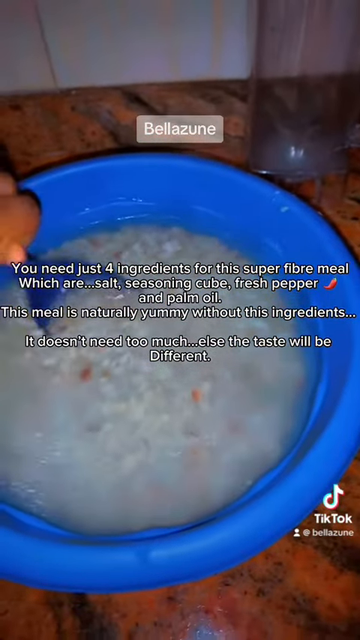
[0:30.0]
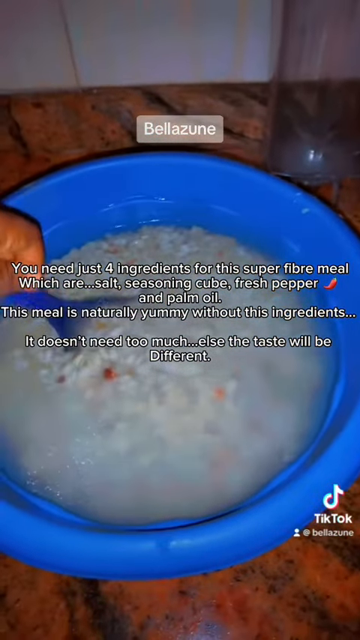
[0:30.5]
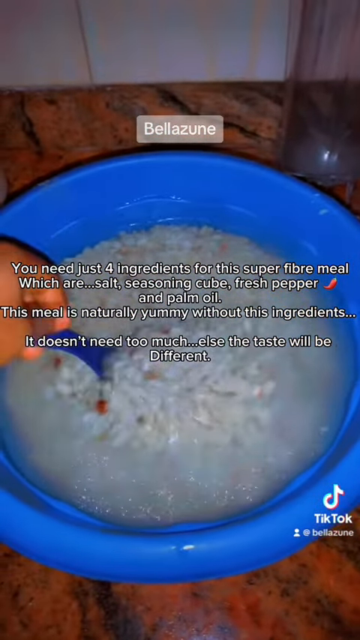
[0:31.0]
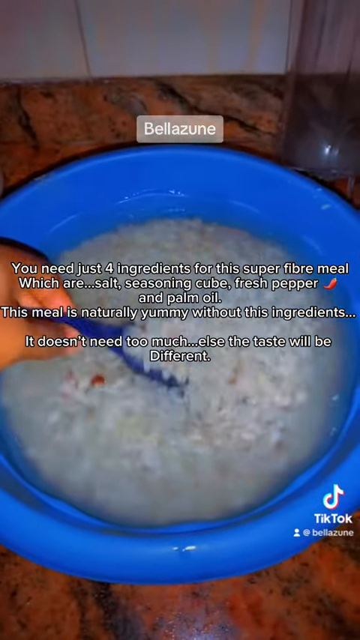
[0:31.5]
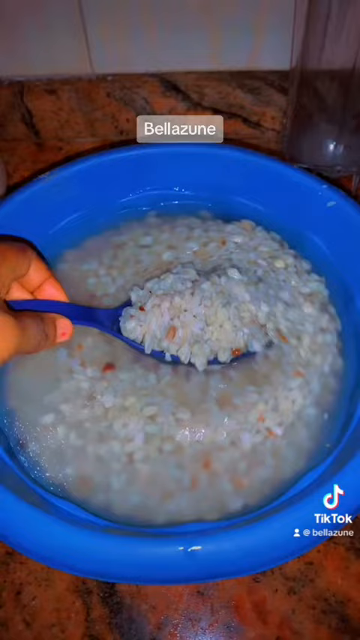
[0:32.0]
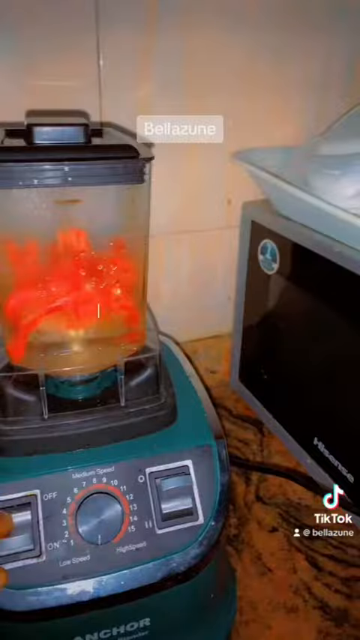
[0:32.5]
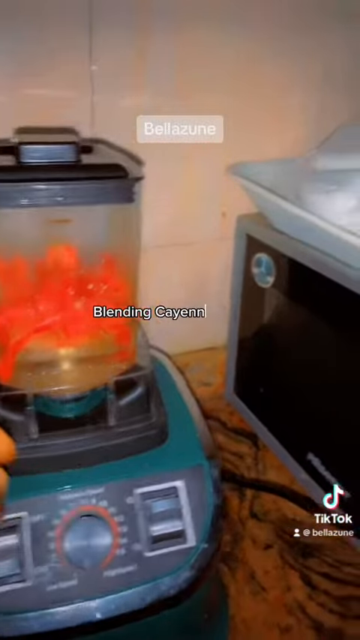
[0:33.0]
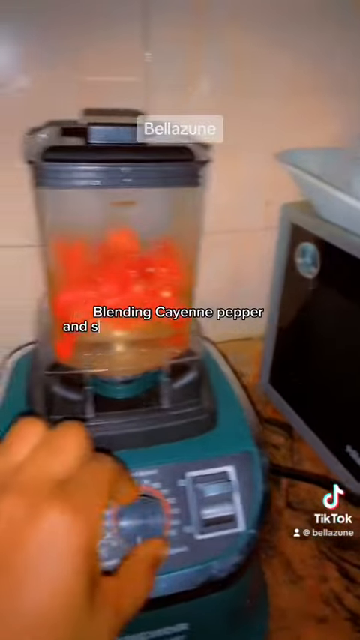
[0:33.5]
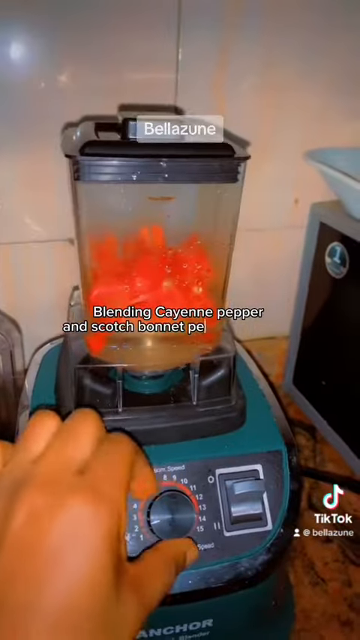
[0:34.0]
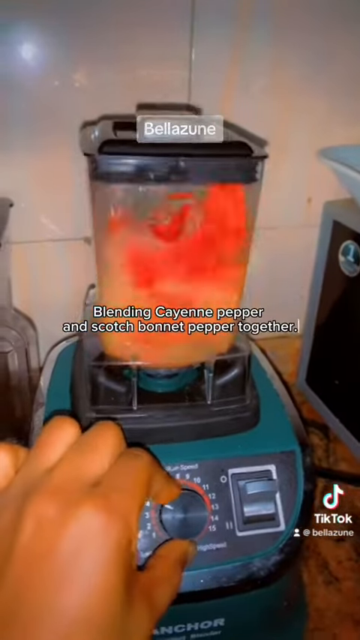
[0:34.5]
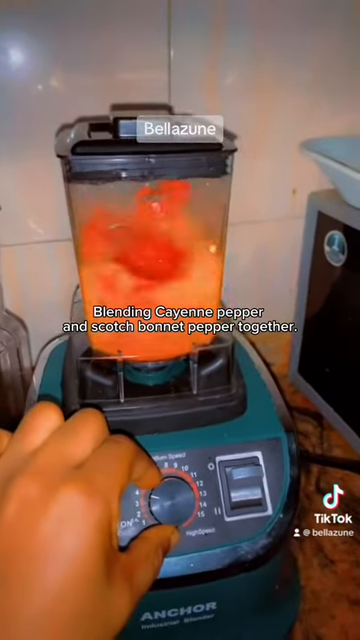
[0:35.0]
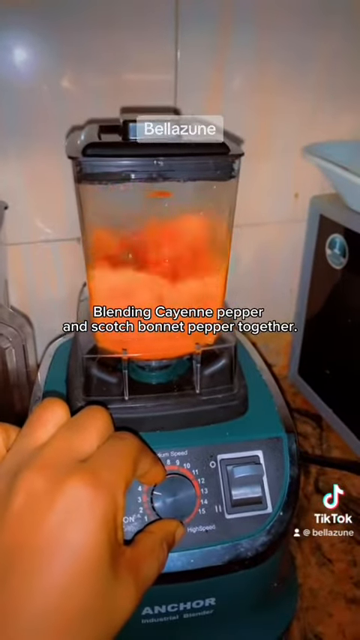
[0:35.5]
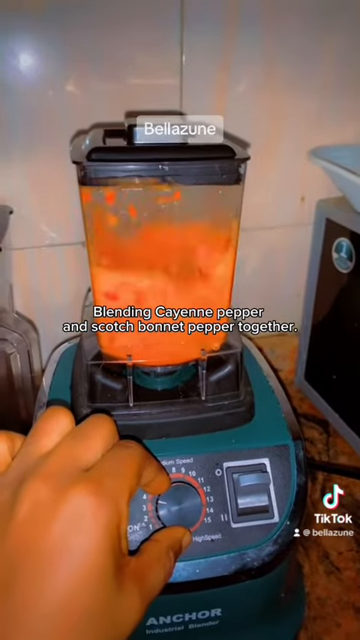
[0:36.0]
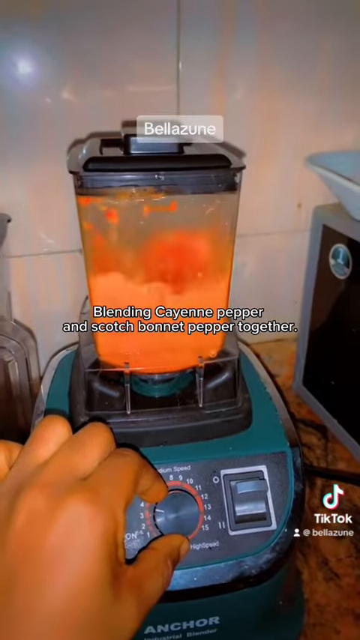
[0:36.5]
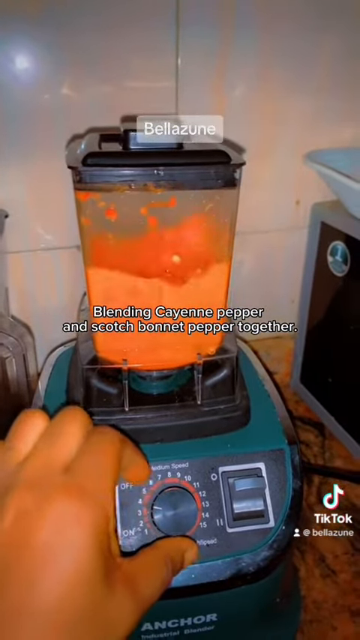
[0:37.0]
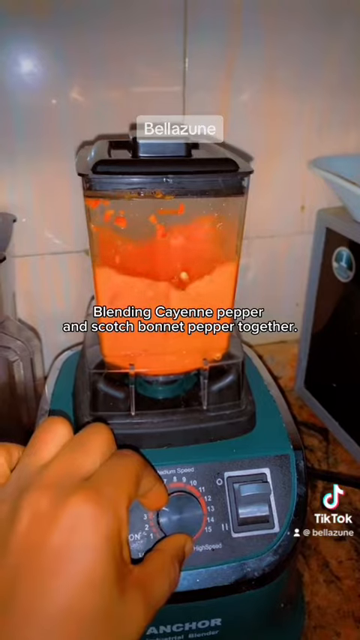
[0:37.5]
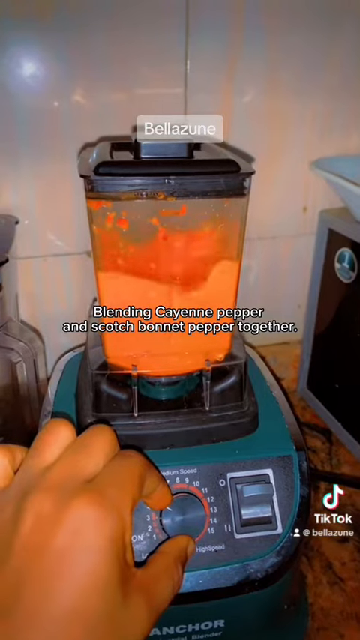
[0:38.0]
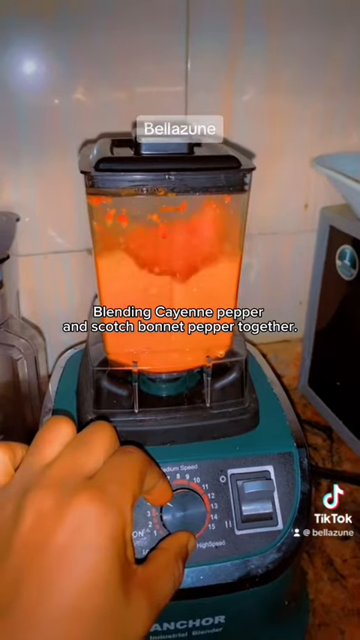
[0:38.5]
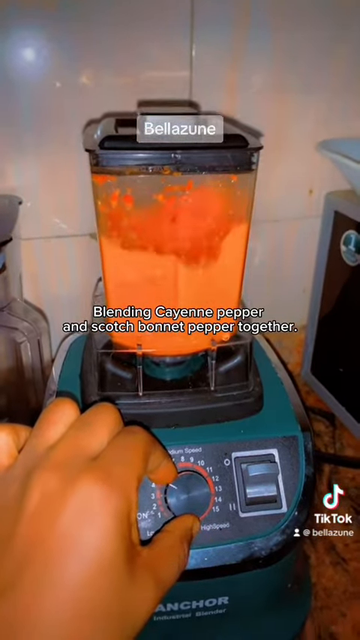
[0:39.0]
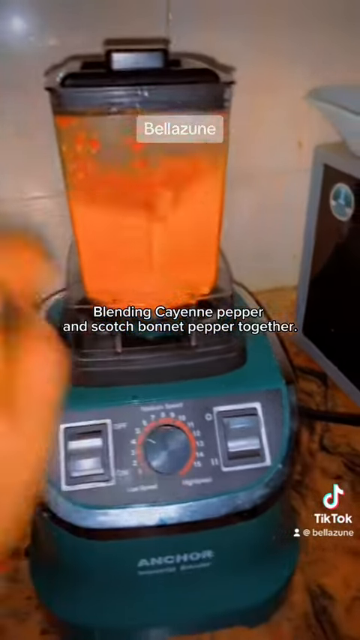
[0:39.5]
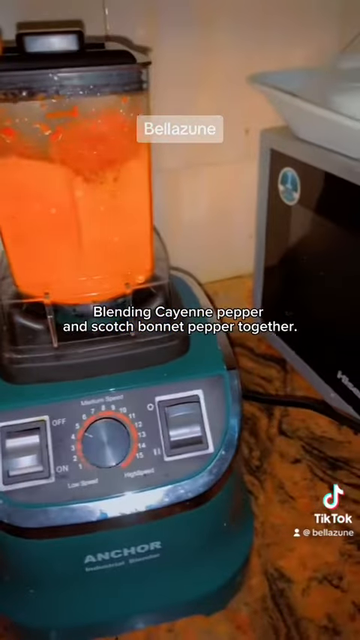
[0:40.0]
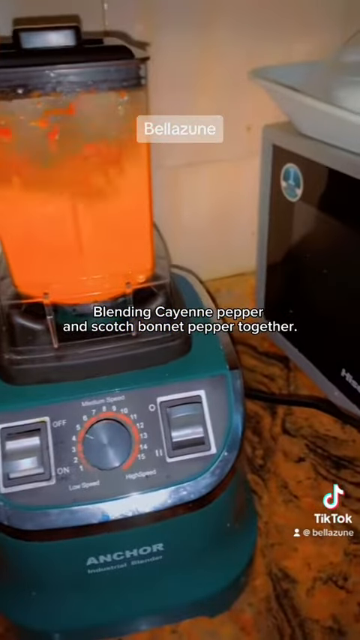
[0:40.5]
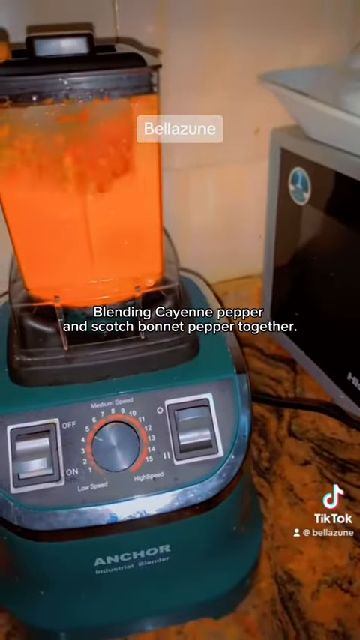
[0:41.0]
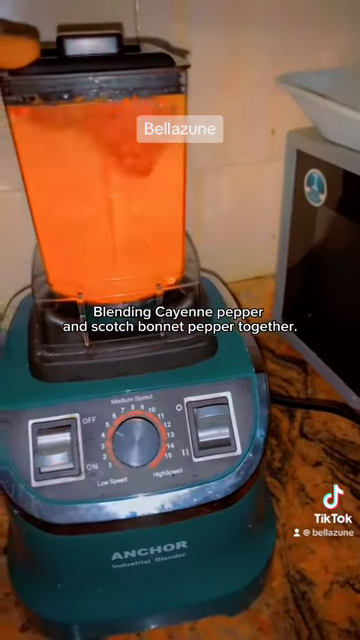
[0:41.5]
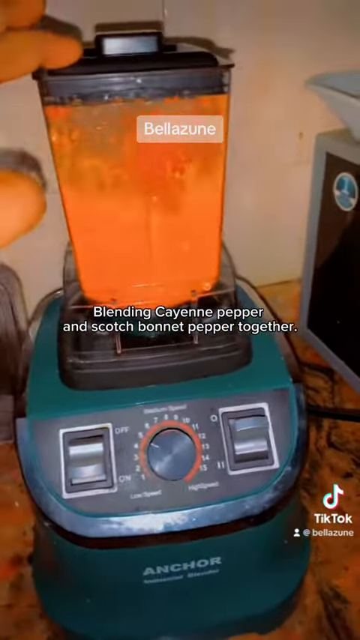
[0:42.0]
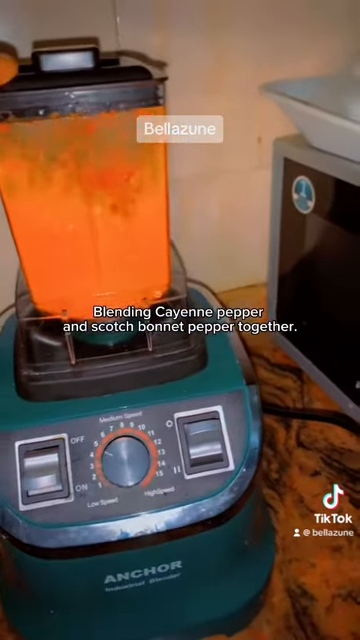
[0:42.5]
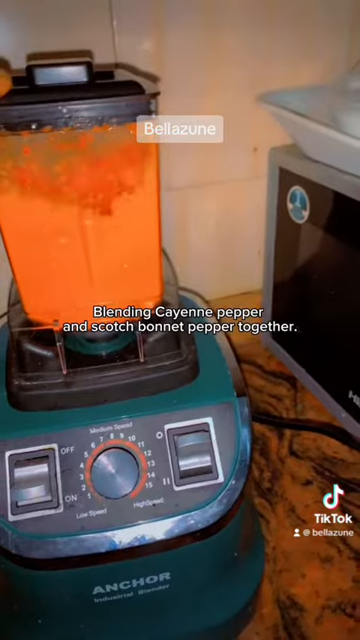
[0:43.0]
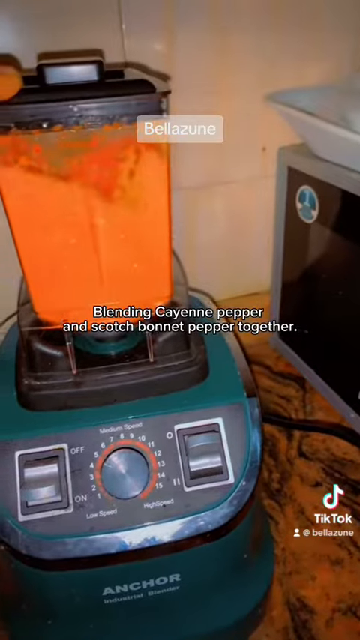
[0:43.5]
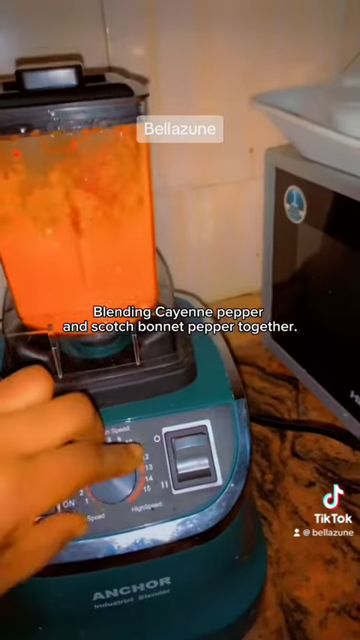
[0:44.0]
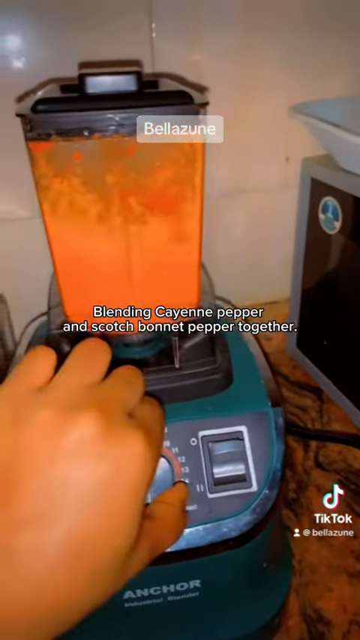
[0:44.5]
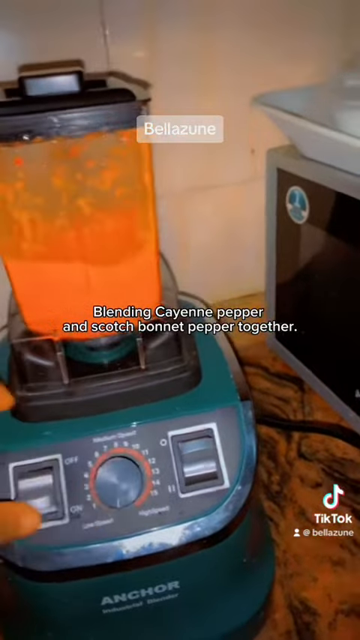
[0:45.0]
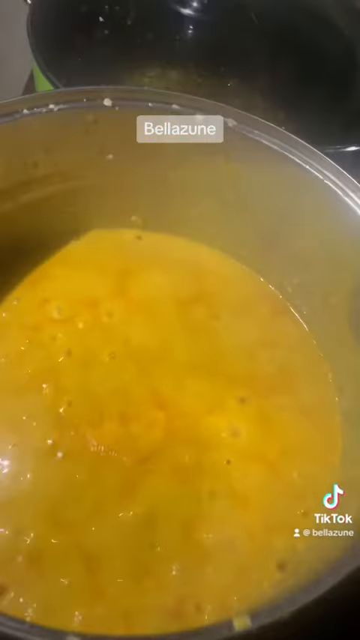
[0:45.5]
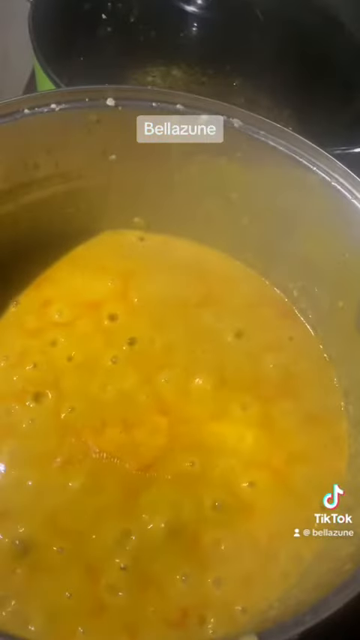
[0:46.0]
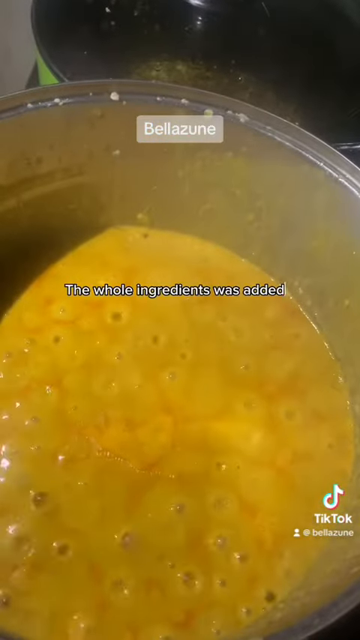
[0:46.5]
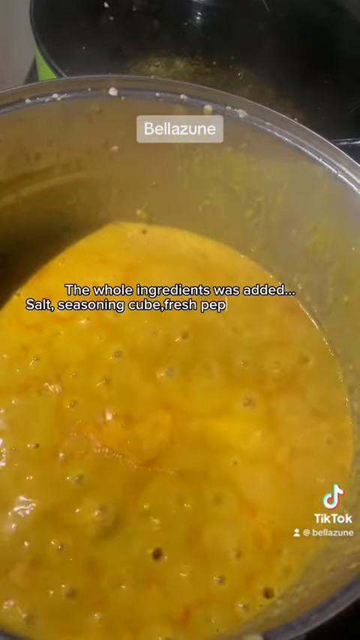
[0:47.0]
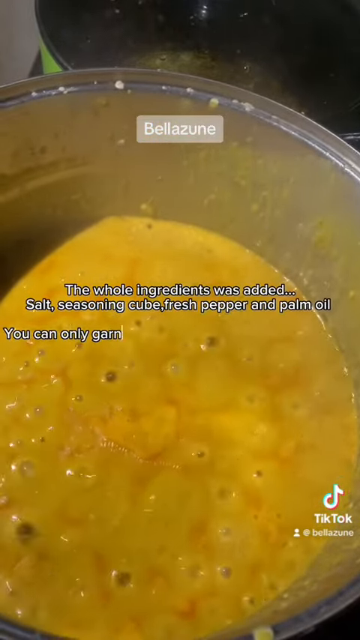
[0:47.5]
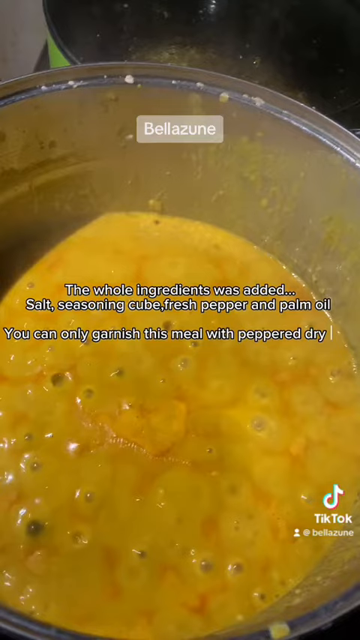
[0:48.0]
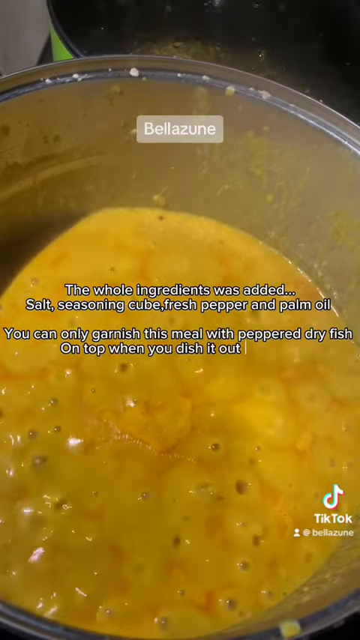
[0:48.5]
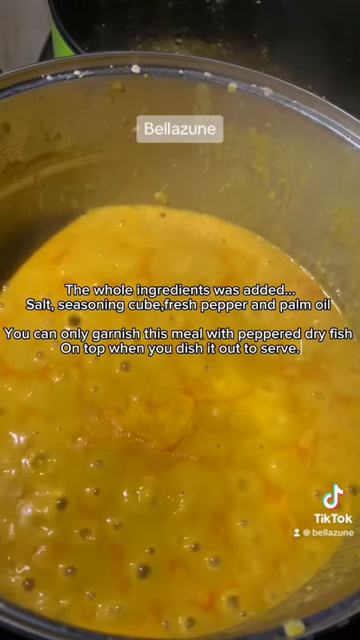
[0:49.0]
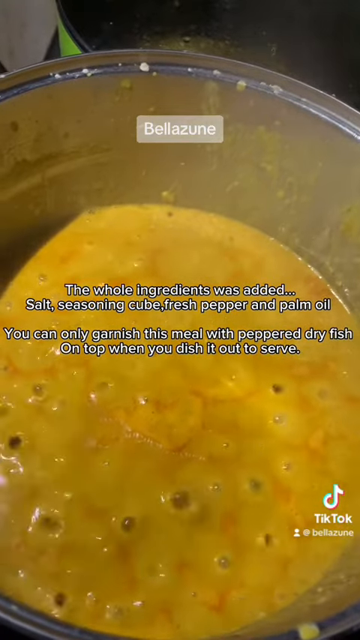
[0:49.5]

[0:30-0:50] The ingredients graphic is still on screen. A hand comes in and stirs the mixture in the round blue bowl. The video then cuts to a food processor, which looks green and appears to be blending something red. On the right-hand side there is probably a microwave with a dish on top. The hand comes in to blend the red contents, and the graphic refers to blending cayenne pepper and scotch bonnet pepper together. The mixture turns from distinct red solid pieces into a runny orange gloop. The blender's brand is Anchor. The hand holds the top of the blender and then turns it off. Just before the end, the video cuts to what looks a bit like a bowl of boiling custard, possibly the earlier food after a long period of cooking. A graphic reads: "The whole ingredients was added... salt, seasoning cube, fresh pepper, and palm oil. You can only garnish this meal with peppered dry fish On top, when you dish it out to serve."